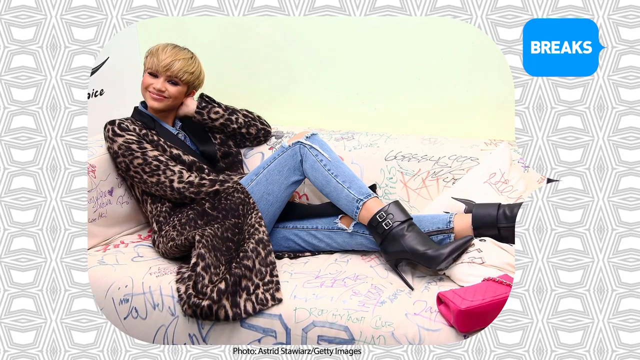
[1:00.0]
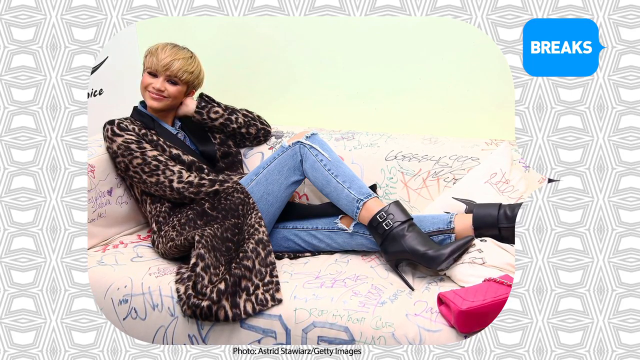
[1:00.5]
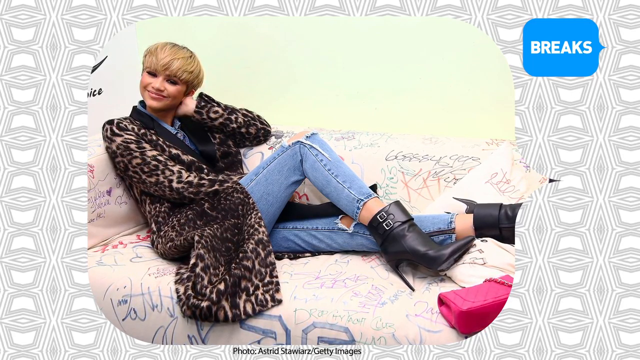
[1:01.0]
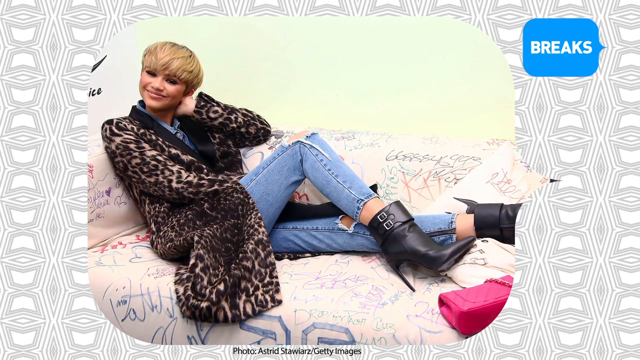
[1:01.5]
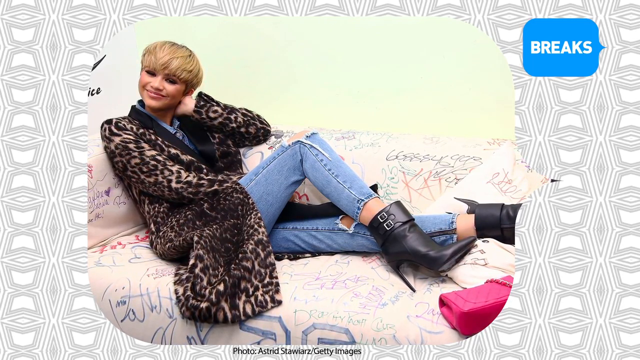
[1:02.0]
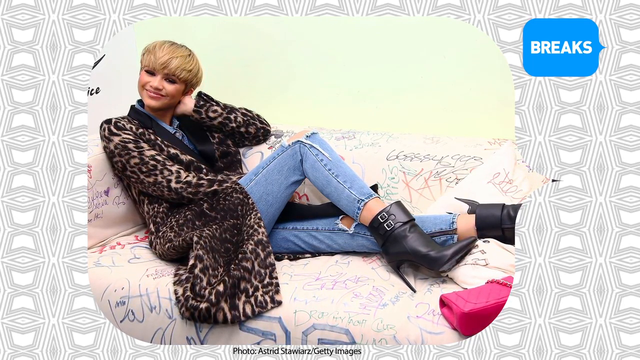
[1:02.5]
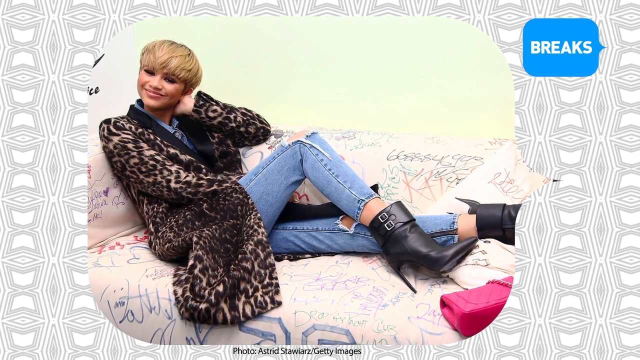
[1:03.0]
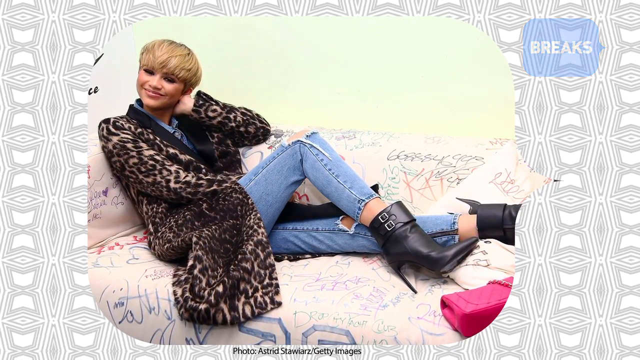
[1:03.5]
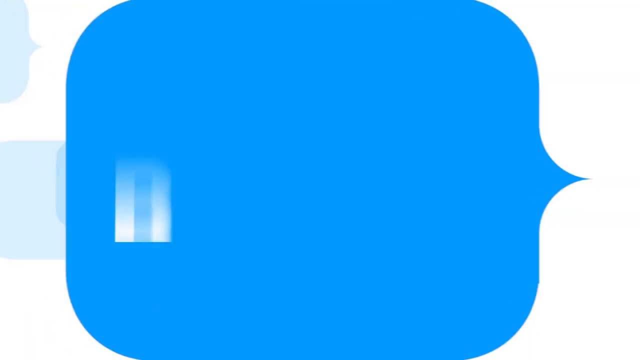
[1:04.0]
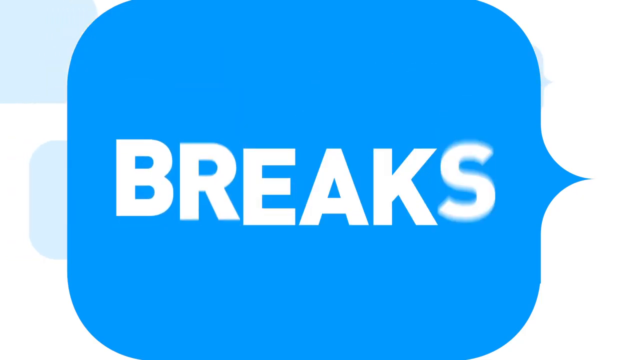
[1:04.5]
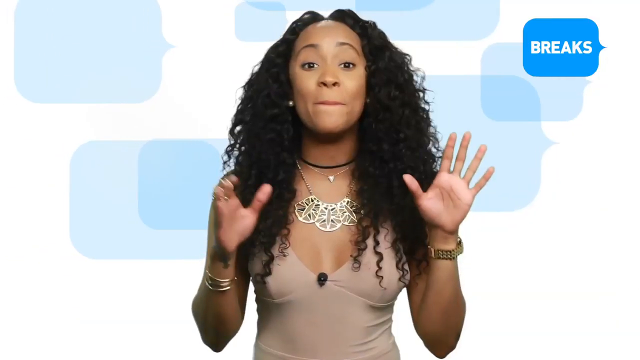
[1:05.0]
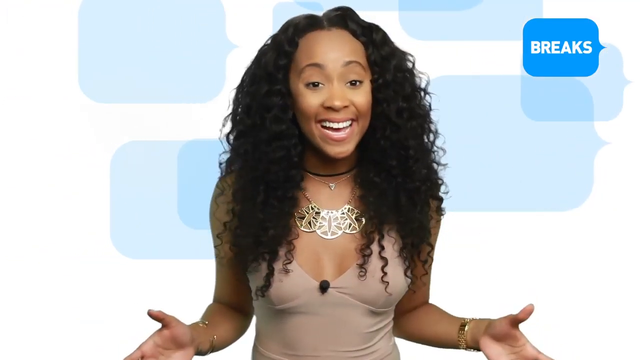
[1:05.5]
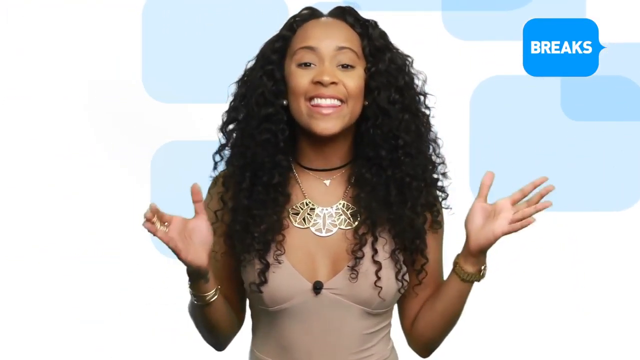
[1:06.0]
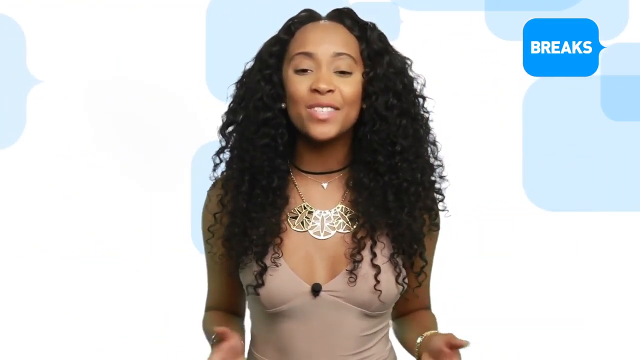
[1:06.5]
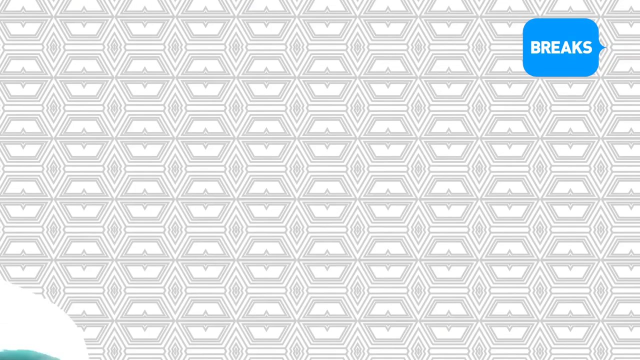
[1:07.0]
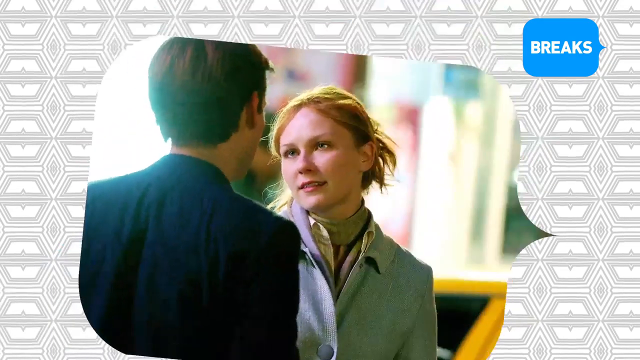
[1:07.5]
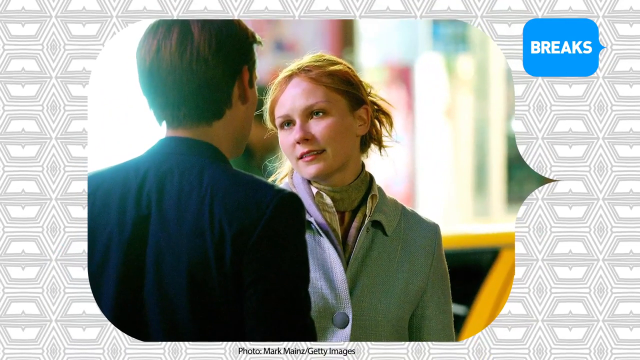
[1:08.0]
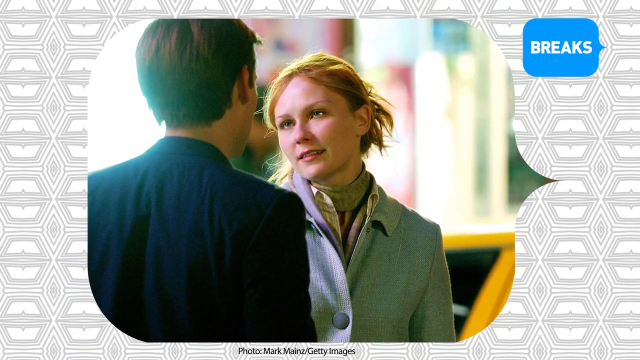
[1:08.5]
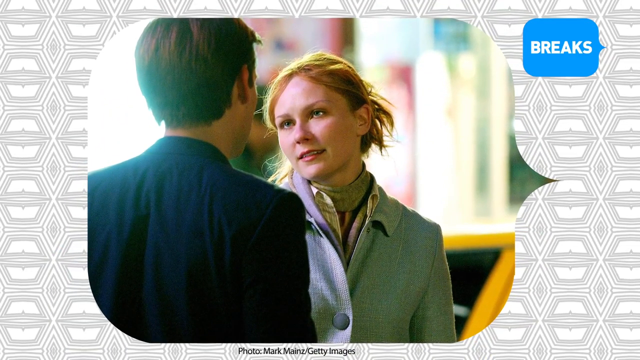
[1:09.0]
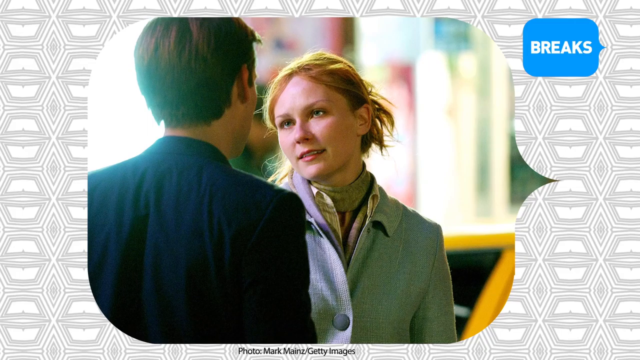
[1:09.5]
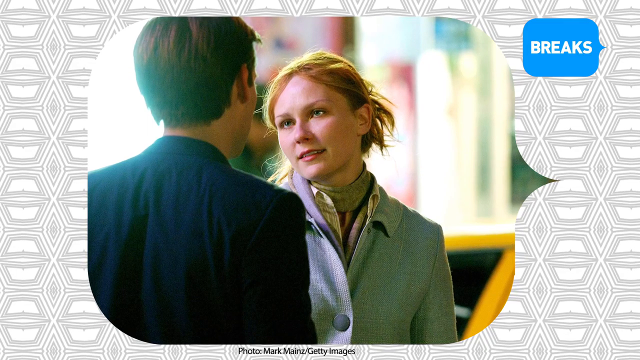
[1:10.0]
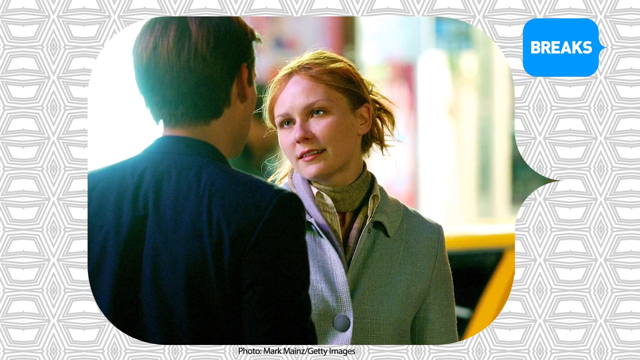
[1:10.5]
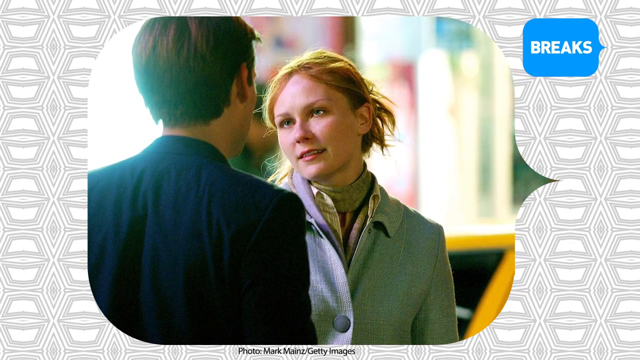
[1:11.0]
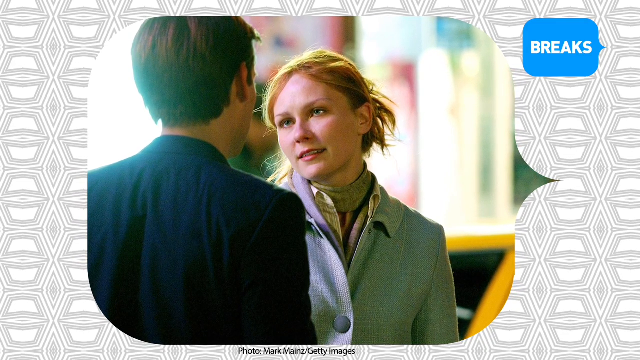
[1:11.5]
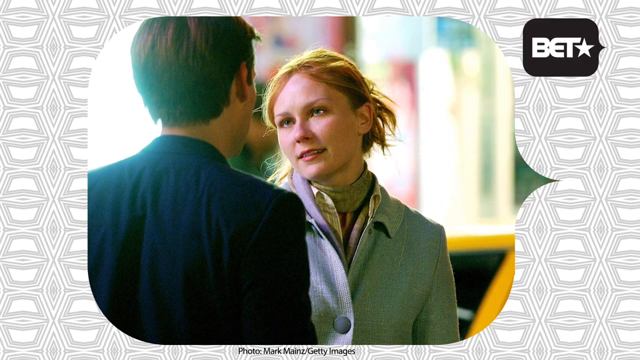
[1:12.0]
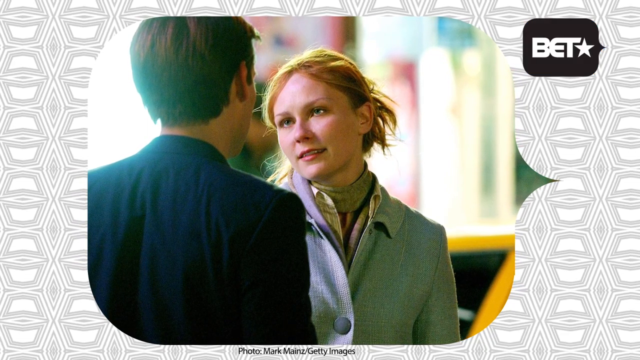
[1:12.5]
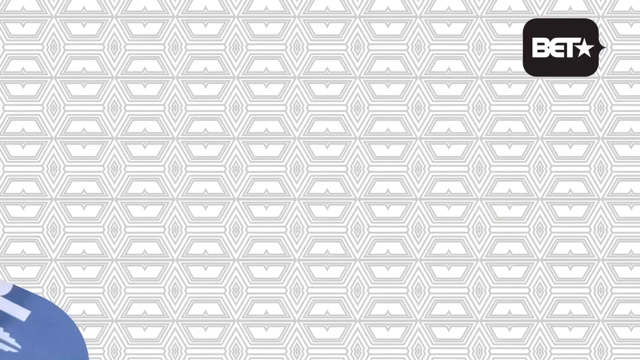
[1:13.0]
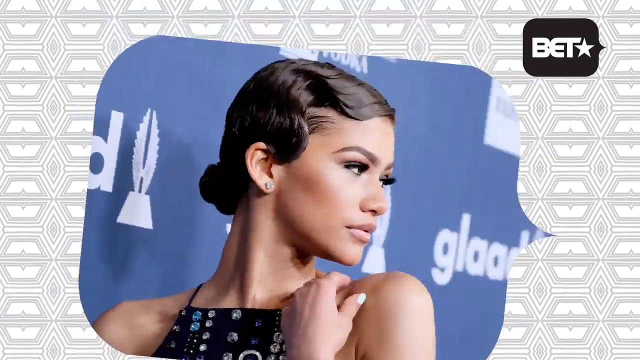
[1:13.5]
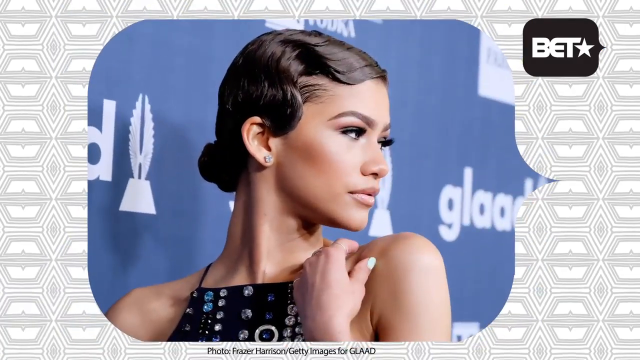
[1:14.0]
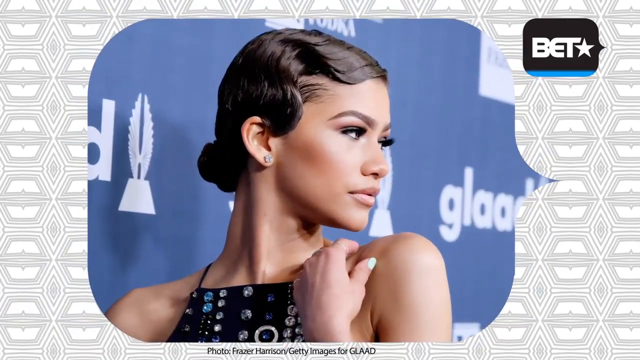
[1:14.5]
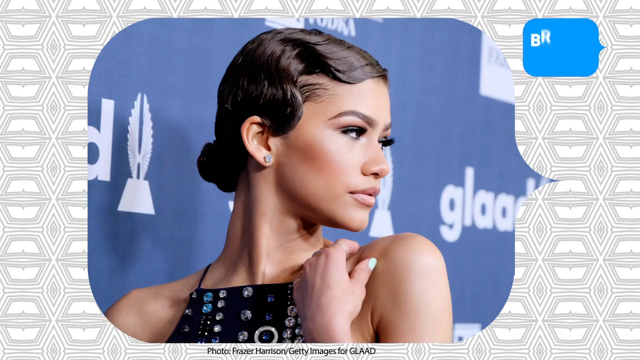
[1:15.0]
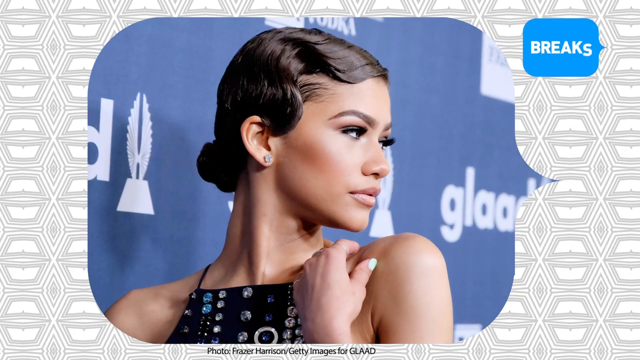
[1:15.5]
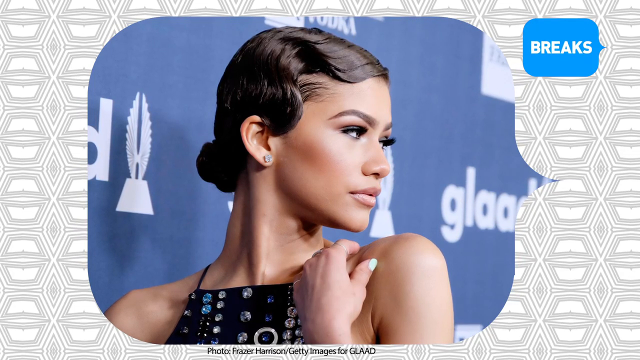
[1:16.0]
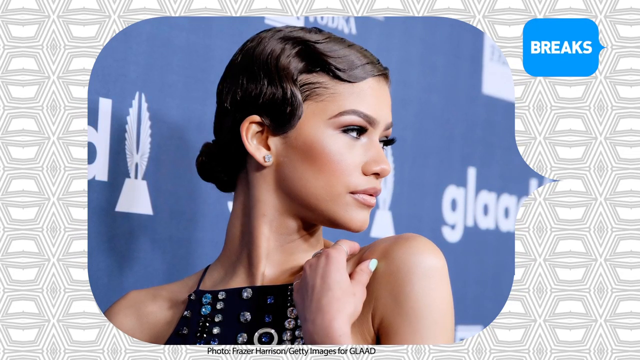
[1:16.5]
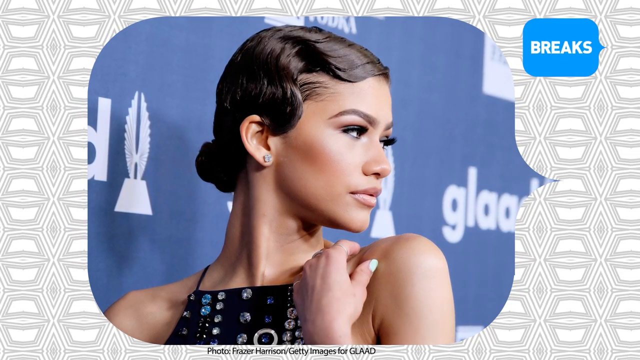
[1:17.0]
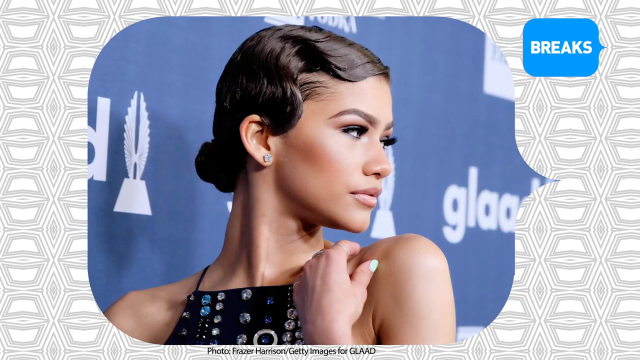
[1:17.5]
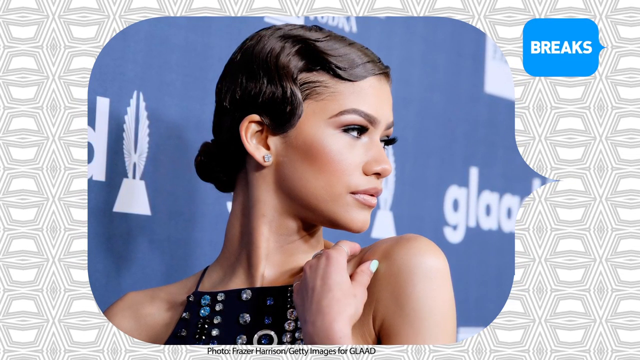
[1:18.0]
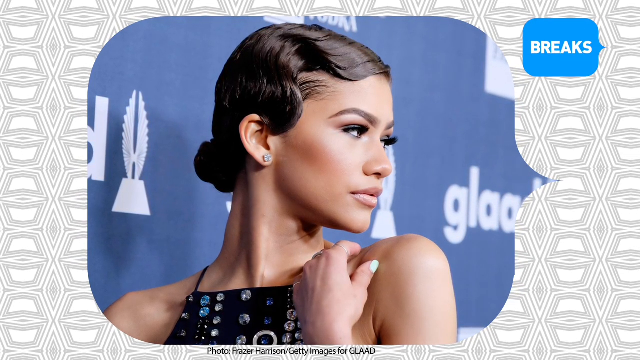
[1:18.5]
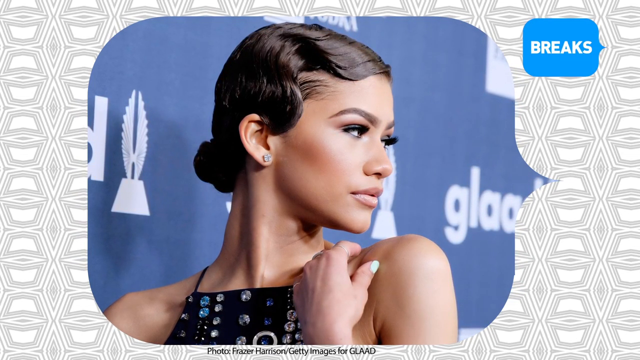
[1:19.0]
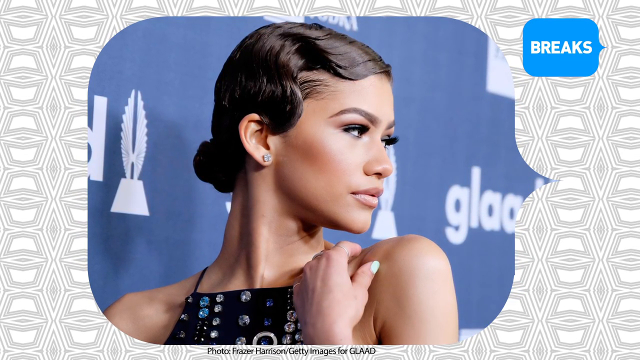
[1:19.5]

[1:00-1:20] The camera focuses on the photograph of the woman lying on a couch. The blue speech bubble with "breaks" in the middle appears from the left of the screen and disappears off to the right. The presenter then appears with both hands raised at shoulder height, palms showing fully to the viewer. She wears a gold bracelet on her left hand and a gold wristwatch on her right. She lowers her hands, spreading them outwards in opposite directions. The video changes to the background with black hexagons, and a photo appears of the actress Kirsten Dunst in a grey coat and a yellow polo neck. She is looking at a man seen only from the back, who wears a blue blazer and has short brown hair. The picture then changes to a photo of a woman with a 1940s-like hairstyle and a silver diamond earring in her left ear. Her left hand is touching her shoulder and she is looking backwards past her left shoulder. She wears a black strappy top and is standing in front of a blue sign.